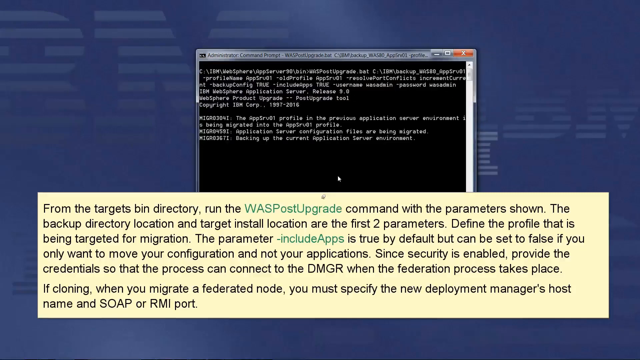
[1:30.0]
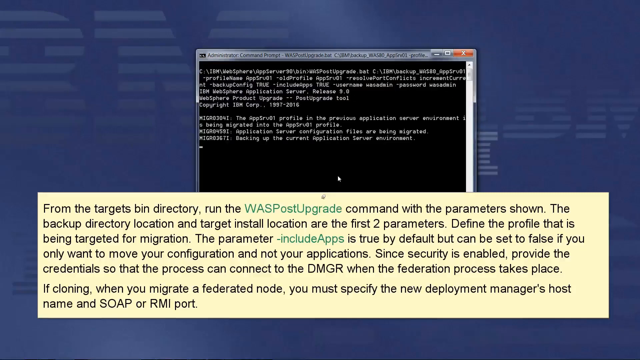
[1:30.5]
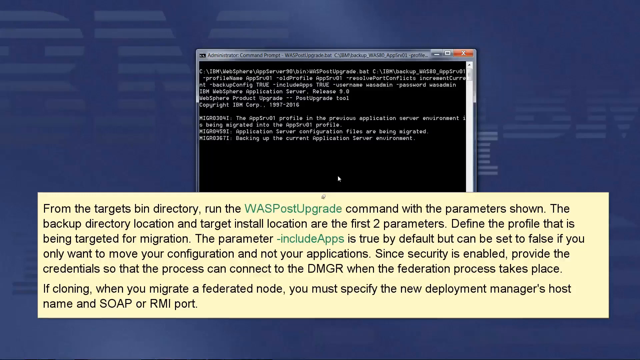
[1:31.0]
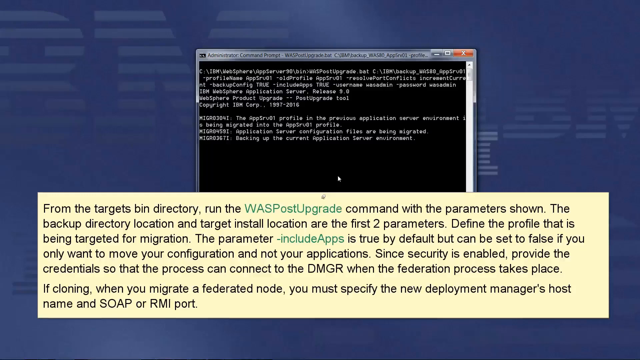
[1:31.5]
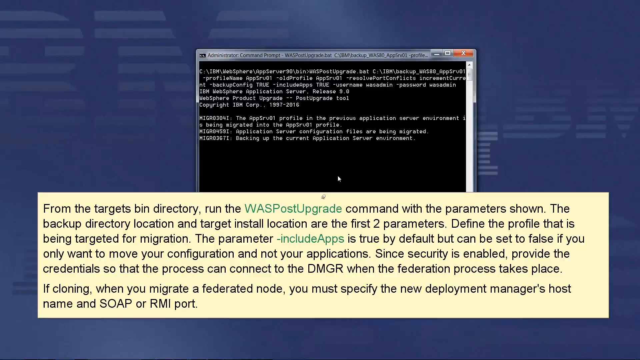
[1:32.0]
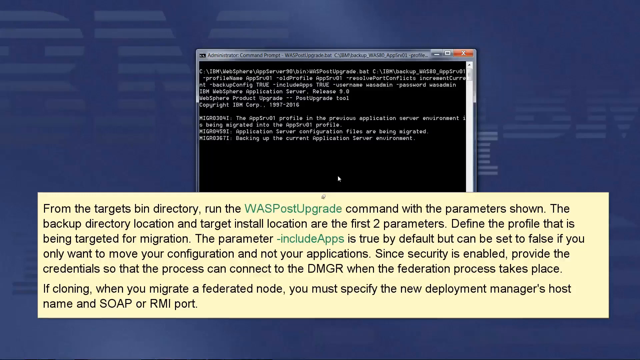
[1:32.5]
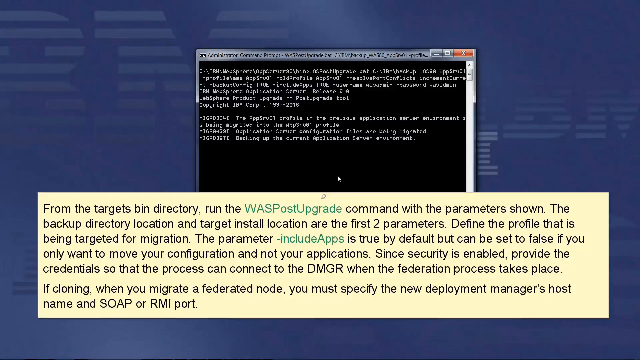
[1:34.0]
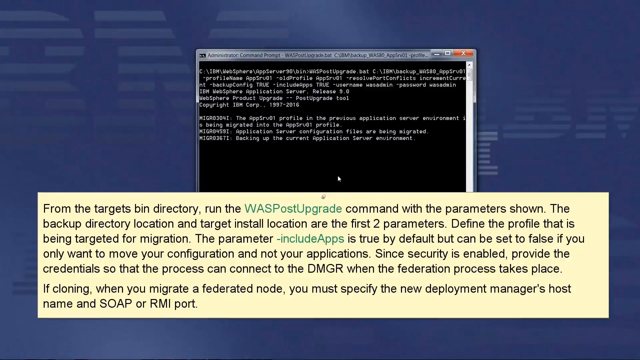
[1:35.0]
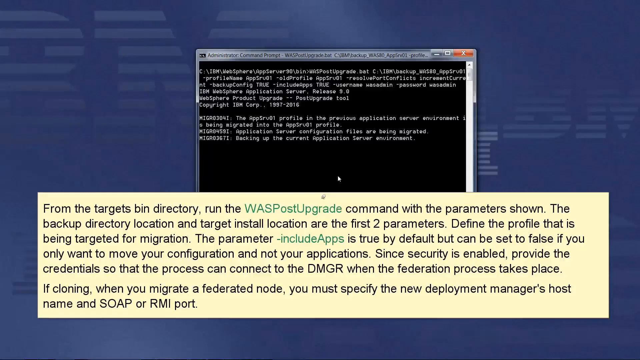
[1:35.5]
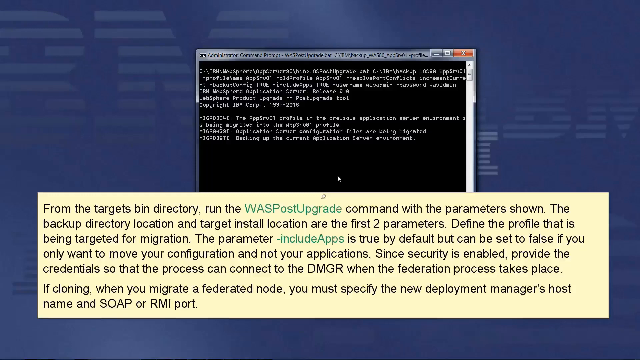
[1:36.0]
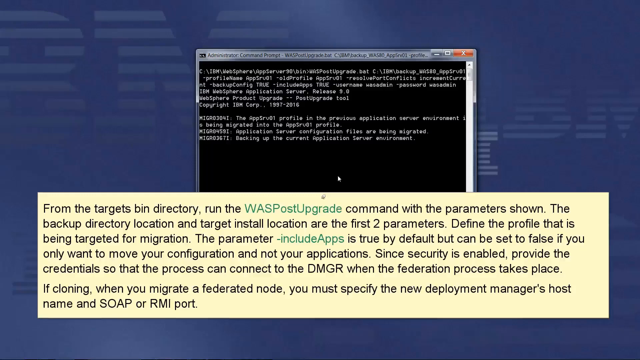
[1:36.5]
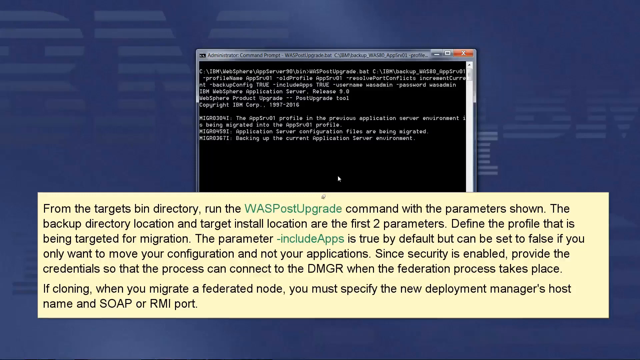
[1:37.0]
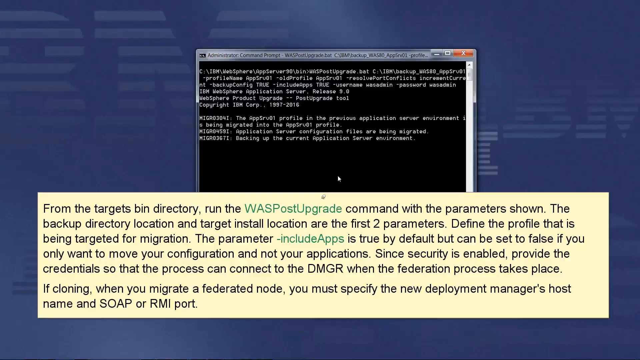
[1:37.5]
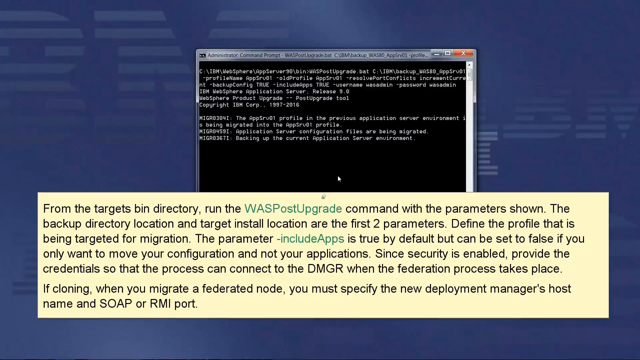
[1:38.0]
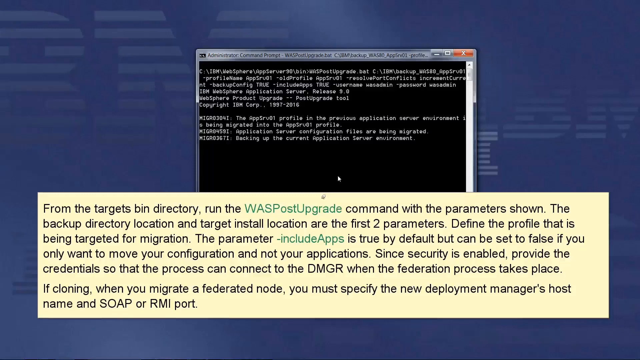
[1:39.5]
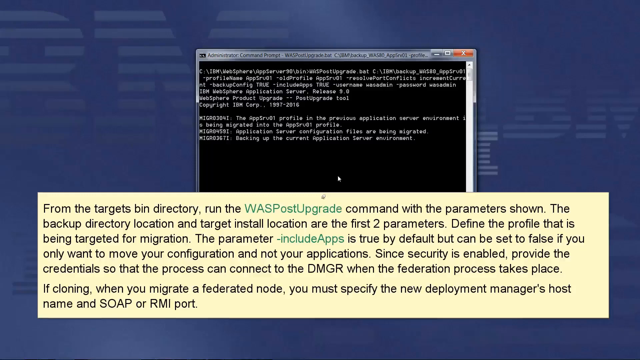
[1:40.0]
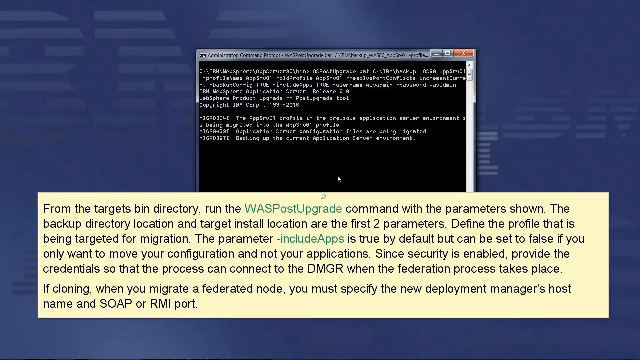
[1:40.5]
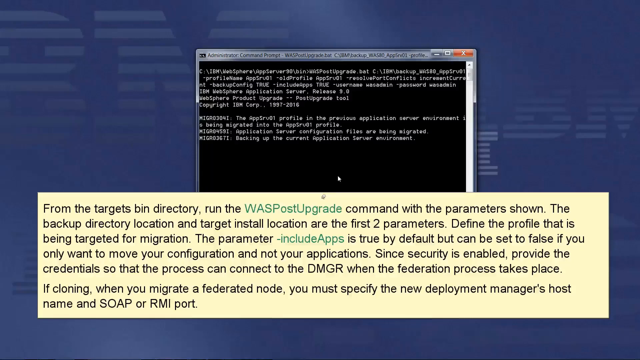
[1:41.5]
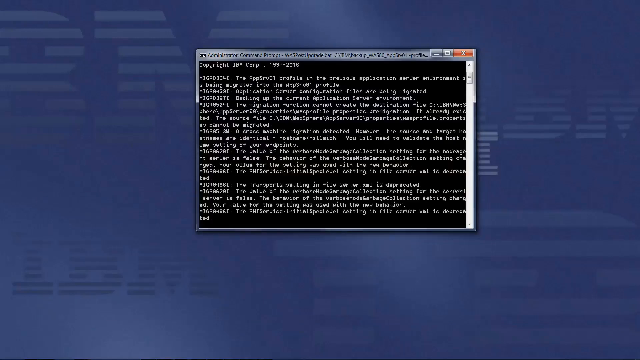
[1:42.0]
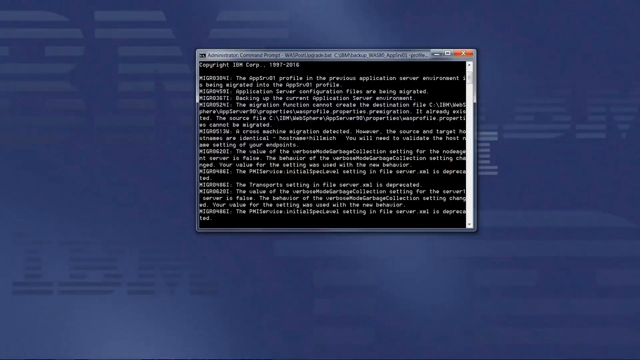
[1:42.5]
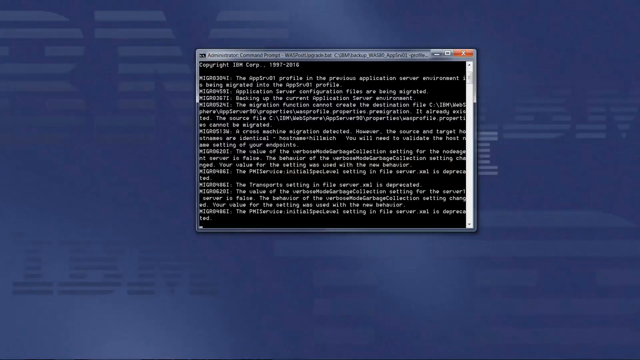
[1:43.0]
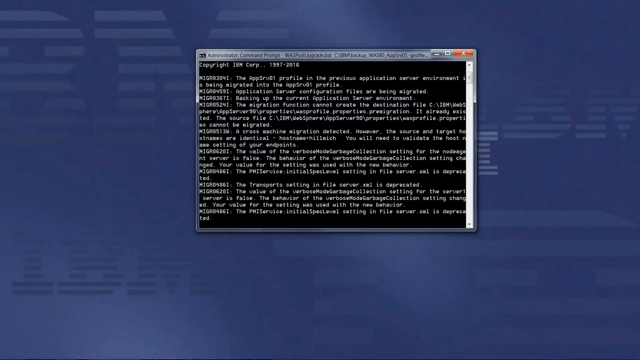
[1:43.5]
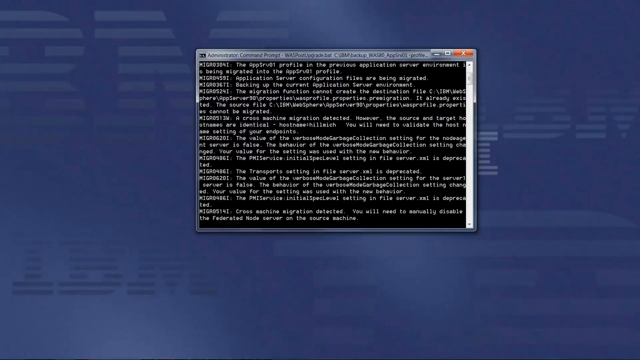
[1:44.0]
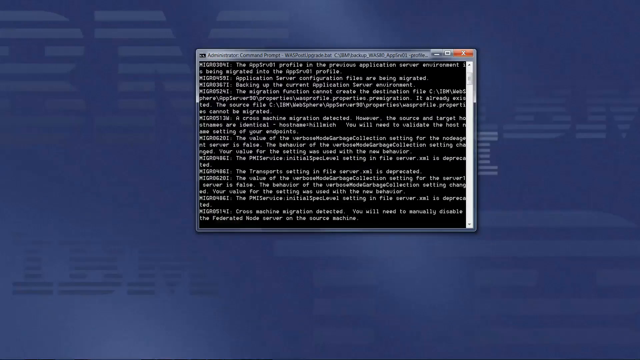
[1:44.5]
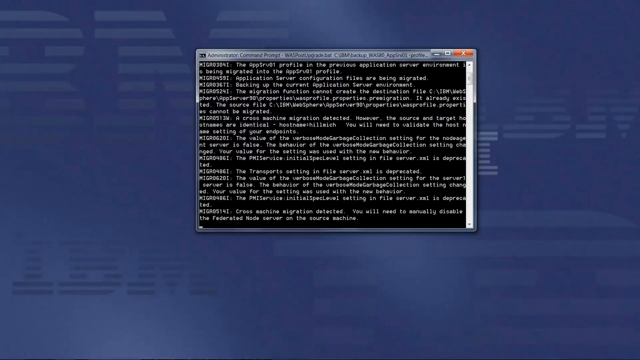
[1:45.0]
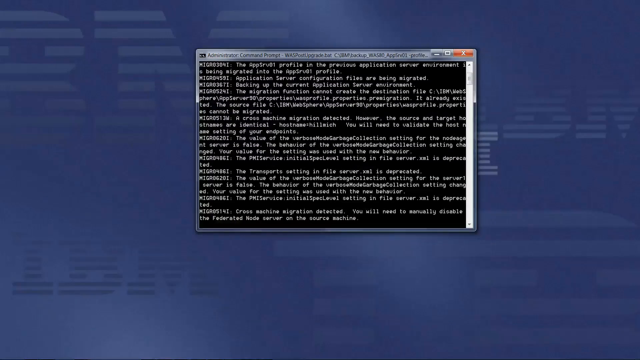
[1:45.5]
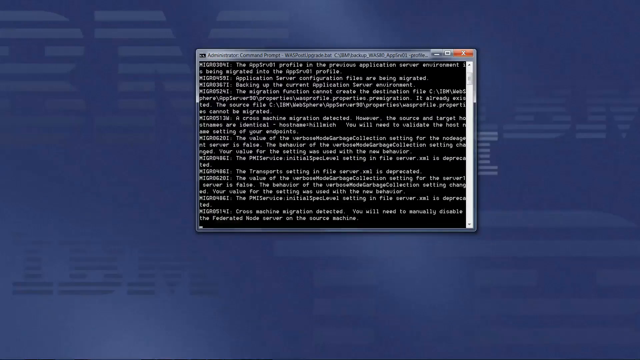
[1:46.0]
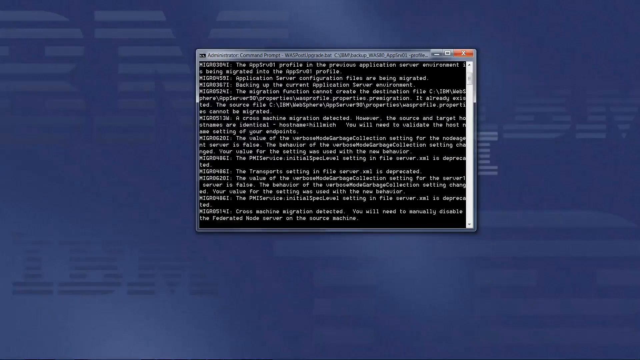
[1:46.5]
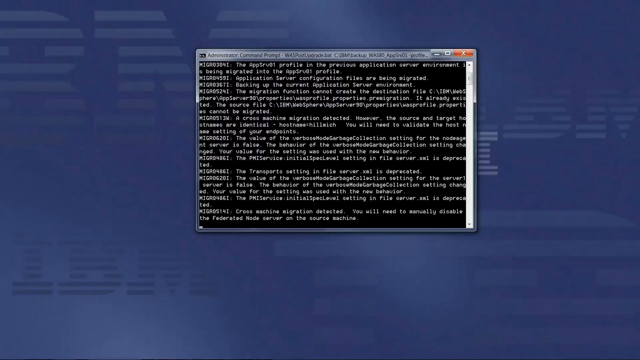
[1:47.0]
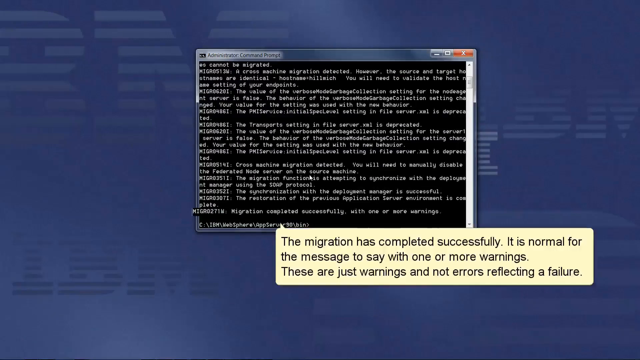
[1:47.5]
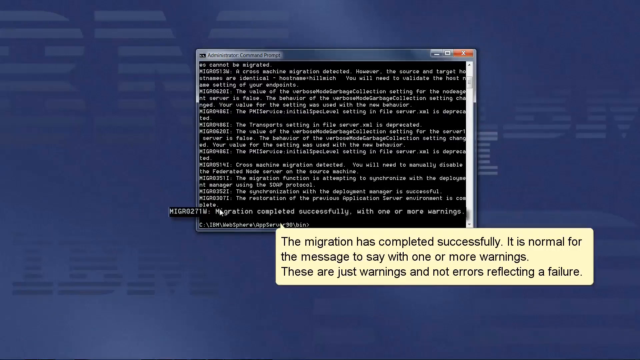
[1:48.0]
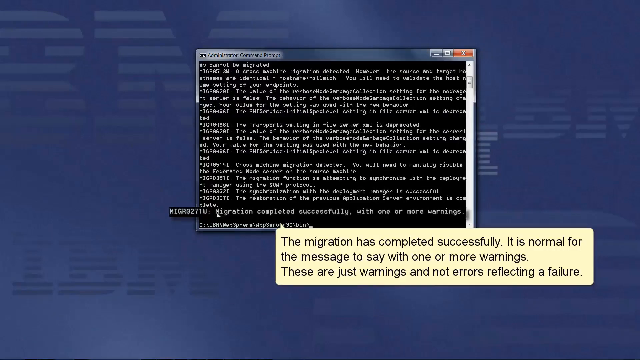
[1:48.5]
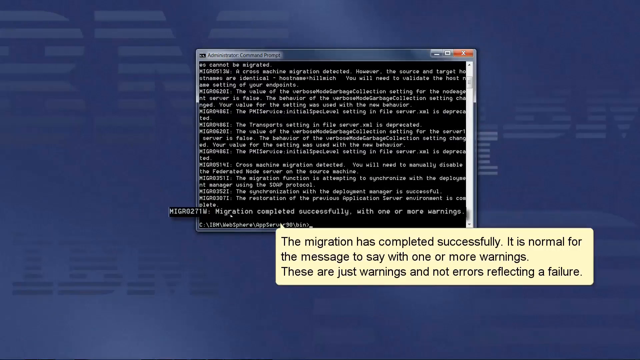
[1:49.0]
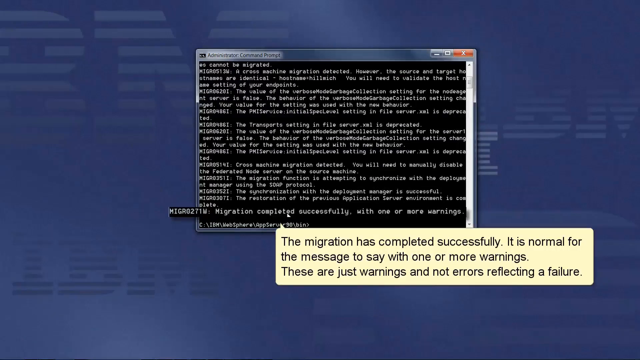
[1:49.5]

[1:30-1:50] An administrative command prompt is open, with the last prompt showing the AppSrv01 profile in the previous application server environment being migrated into the new AppSrv01 profile. A large yellow rectangular box at the bottom of the screen gives information and instructions on how to run the WASPostUpgrade command and the steps to complete the migration. After a few seconds, the screen changes: the yellow box is gone and the command prompt has filled up with more messages. A new message reads "cross machine migration detected you will need to manually disable the federated node server on the source machine." After a few more seconds, further messages indicate that synchronization is successful and that the migration has completed successfully with one or more warnings. That message is kind of magnified slightly so it is highlighted, and a yellow speech bubble pointing to it reads: "the migration has completed successfully. It is normal for the message to say with one or more warnings. These are just warnings and not errors reflecting a failure."